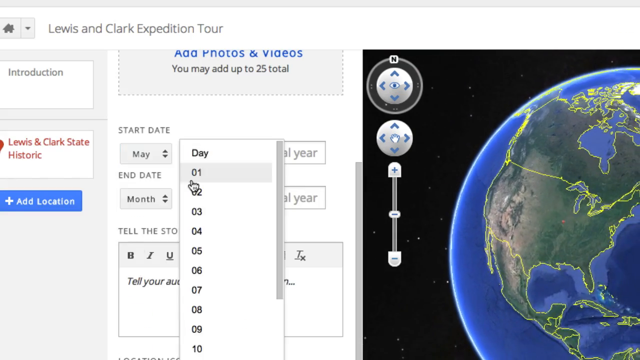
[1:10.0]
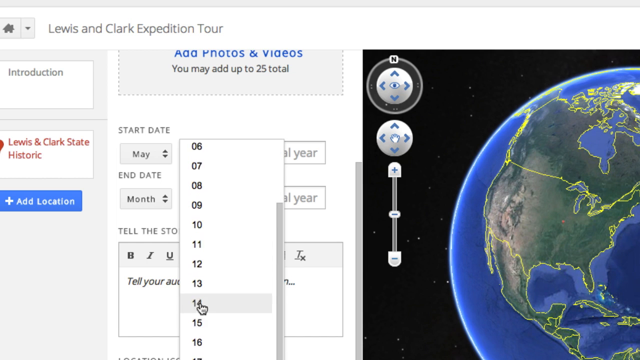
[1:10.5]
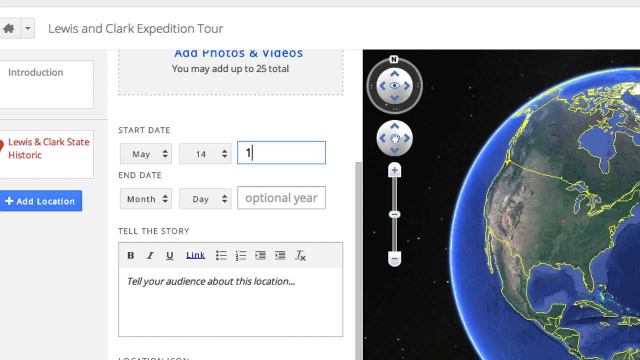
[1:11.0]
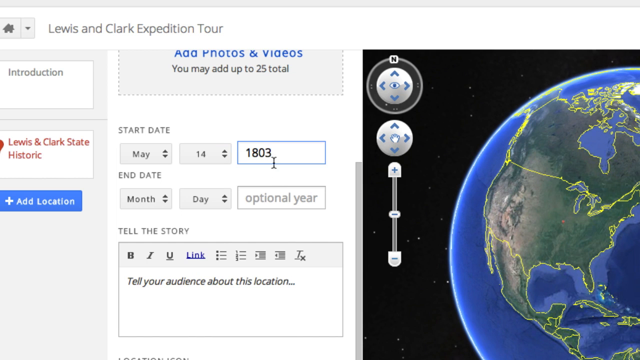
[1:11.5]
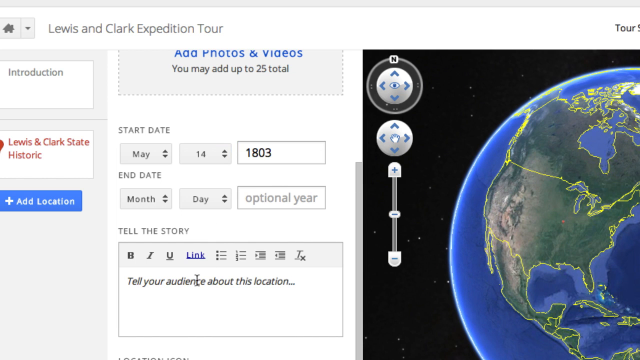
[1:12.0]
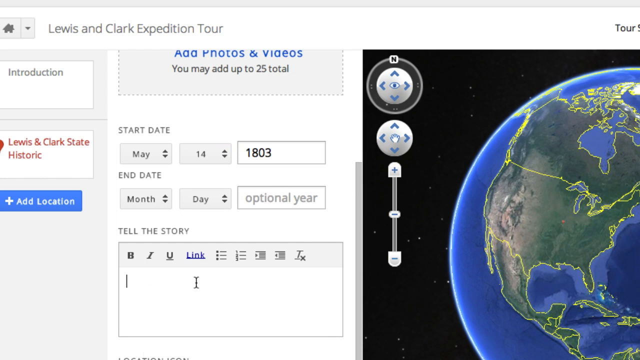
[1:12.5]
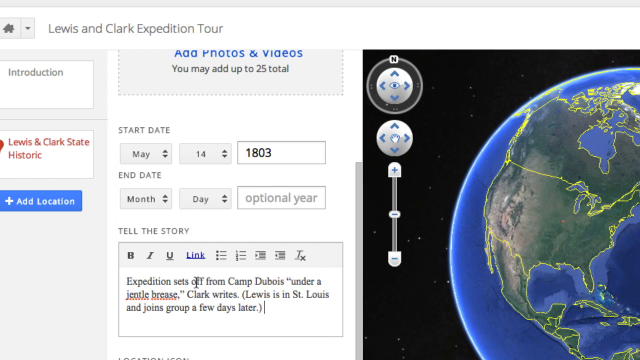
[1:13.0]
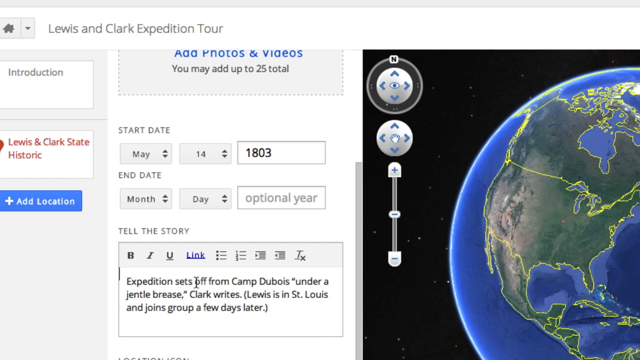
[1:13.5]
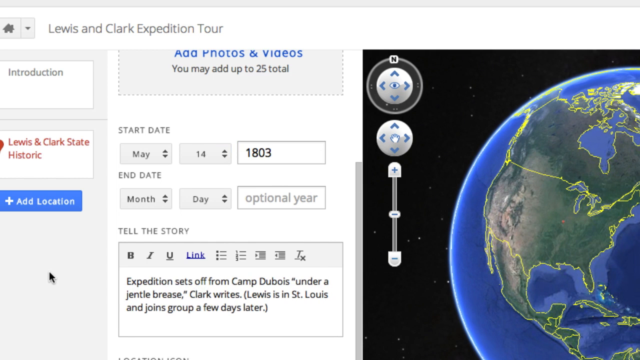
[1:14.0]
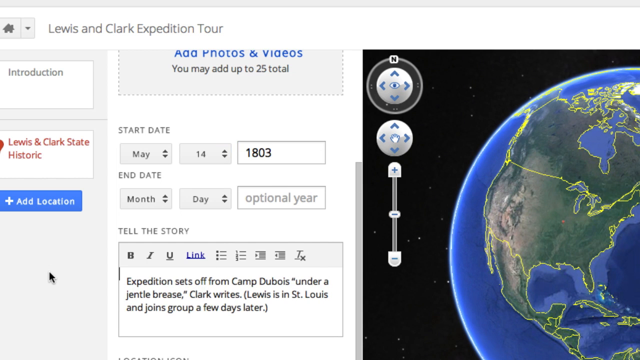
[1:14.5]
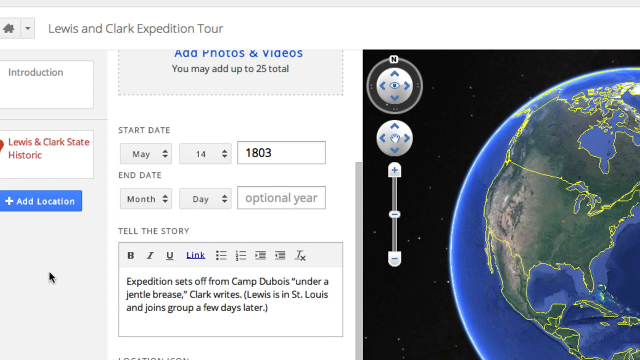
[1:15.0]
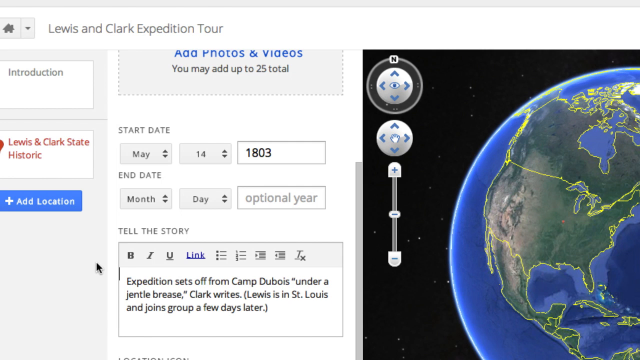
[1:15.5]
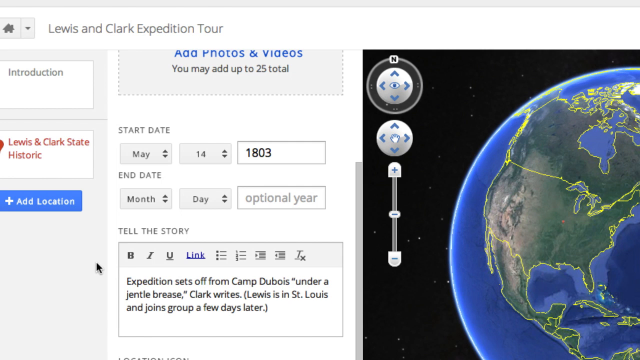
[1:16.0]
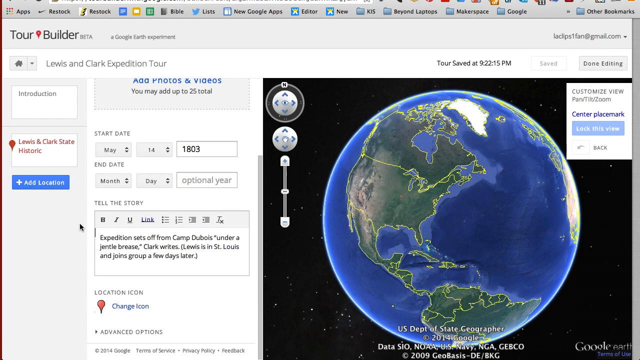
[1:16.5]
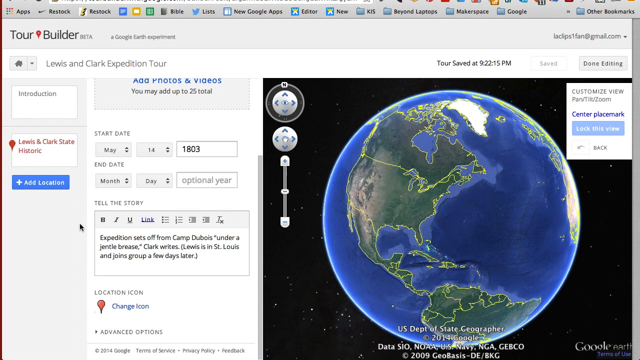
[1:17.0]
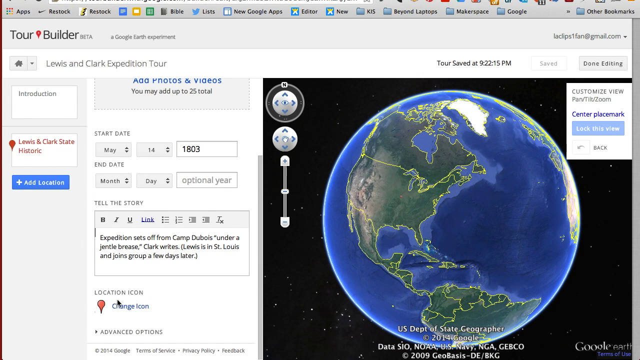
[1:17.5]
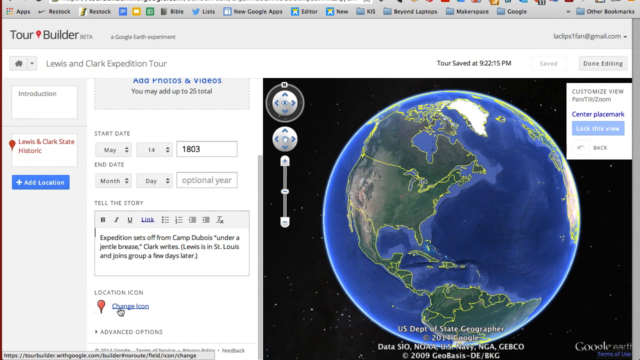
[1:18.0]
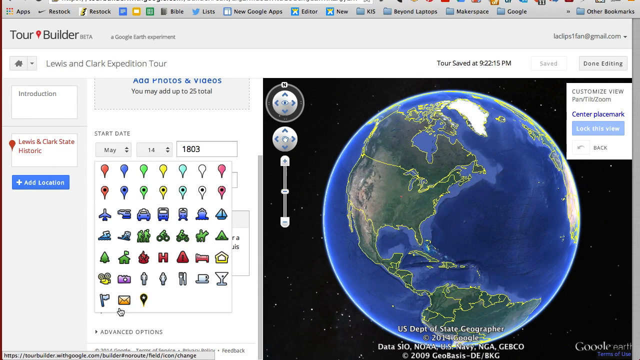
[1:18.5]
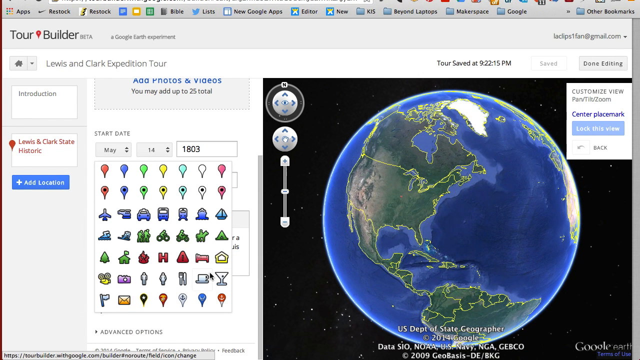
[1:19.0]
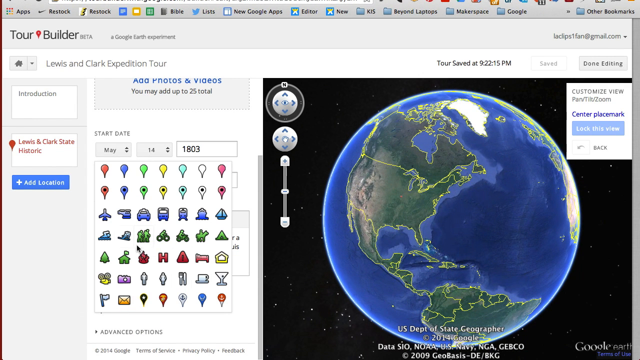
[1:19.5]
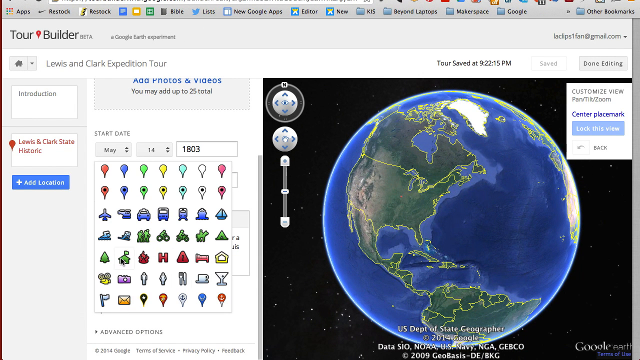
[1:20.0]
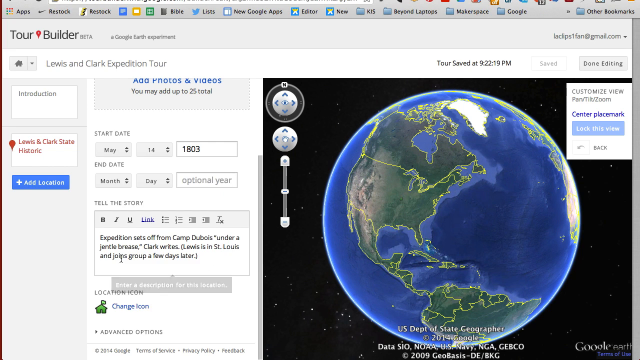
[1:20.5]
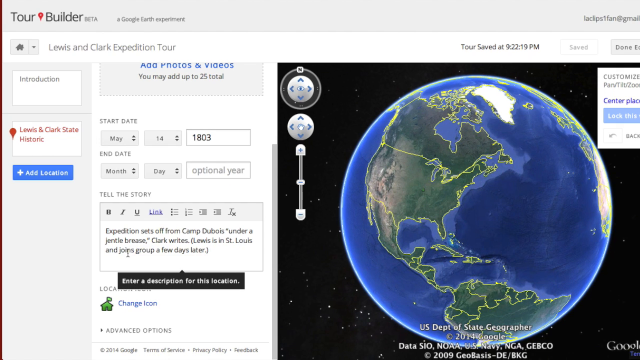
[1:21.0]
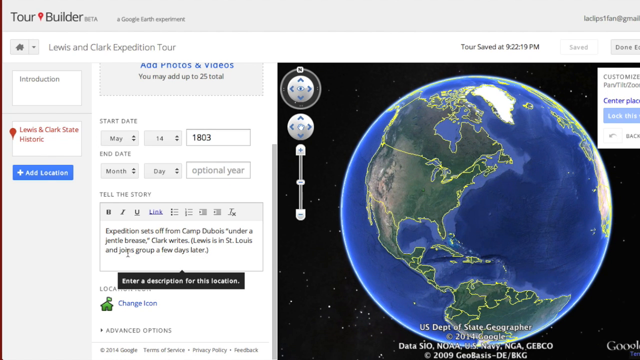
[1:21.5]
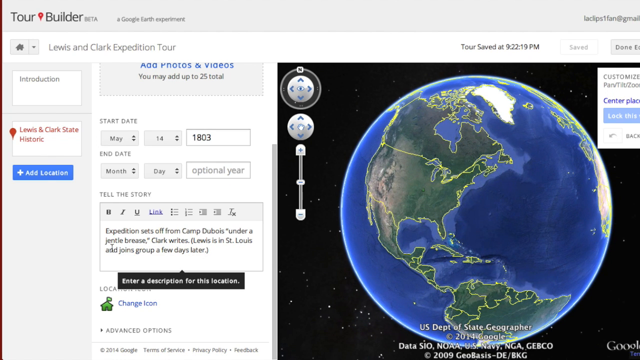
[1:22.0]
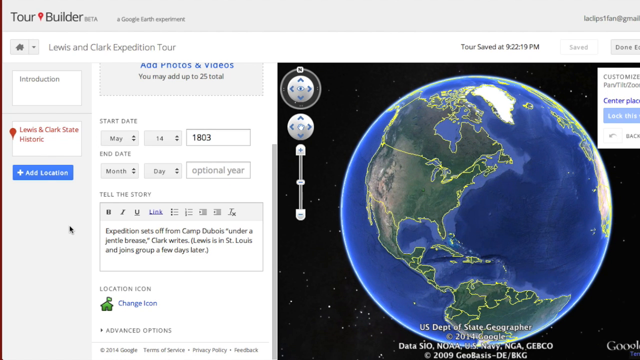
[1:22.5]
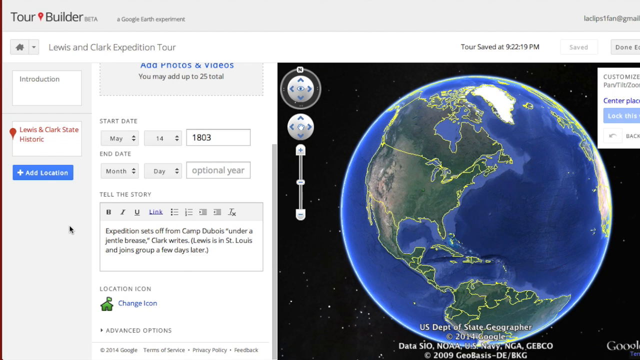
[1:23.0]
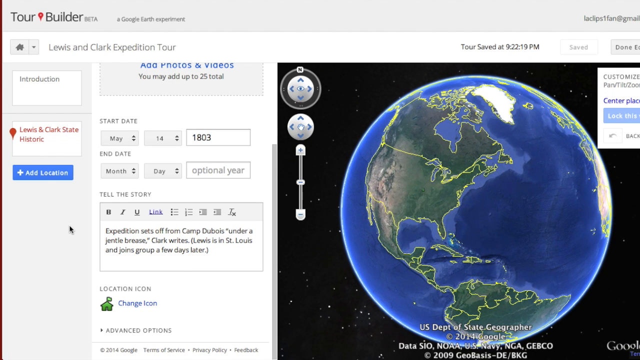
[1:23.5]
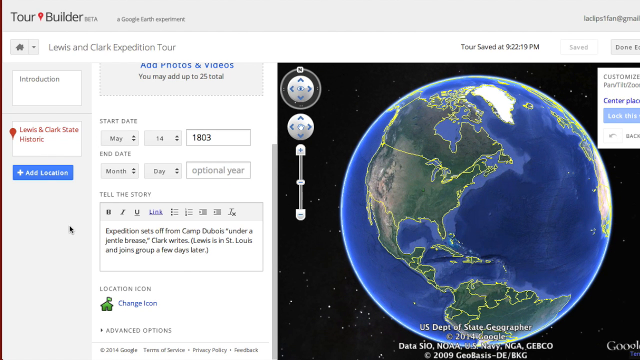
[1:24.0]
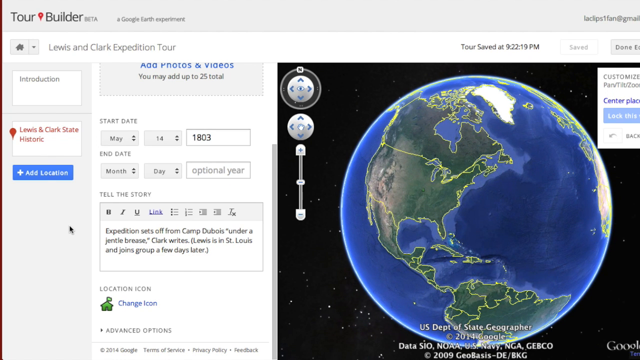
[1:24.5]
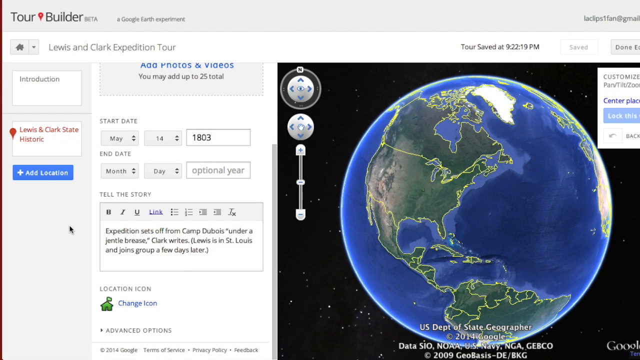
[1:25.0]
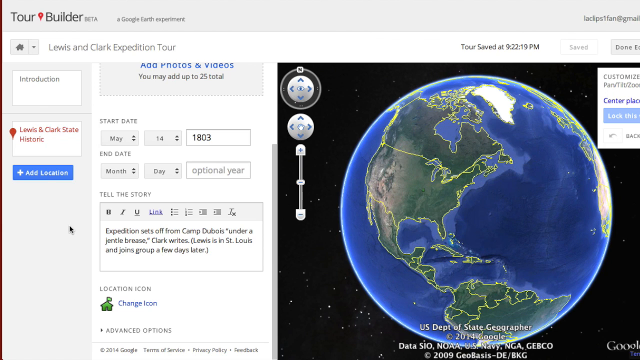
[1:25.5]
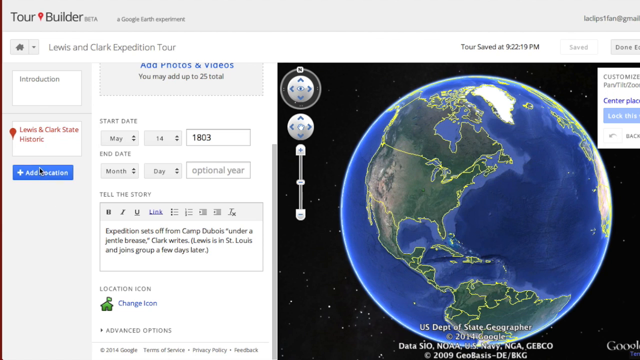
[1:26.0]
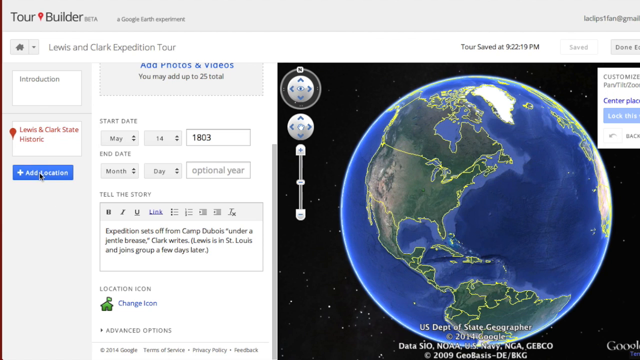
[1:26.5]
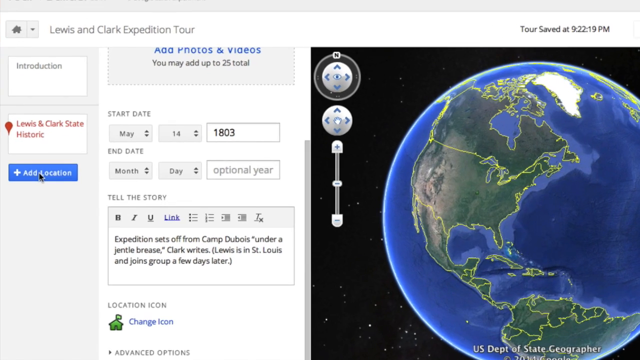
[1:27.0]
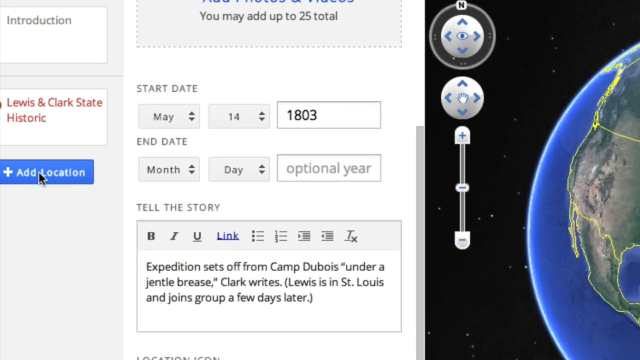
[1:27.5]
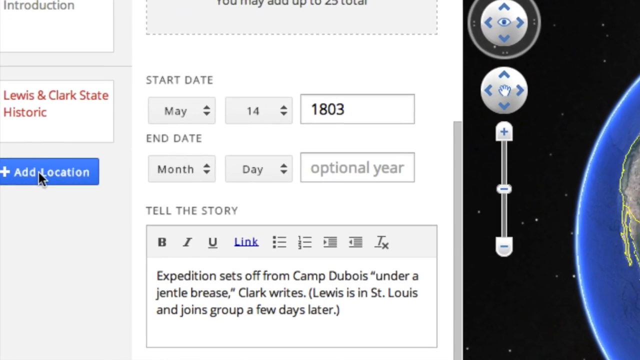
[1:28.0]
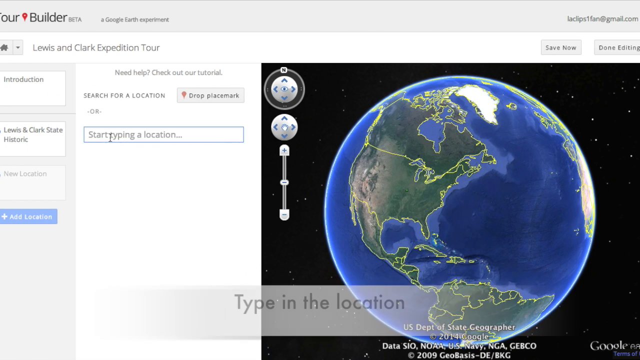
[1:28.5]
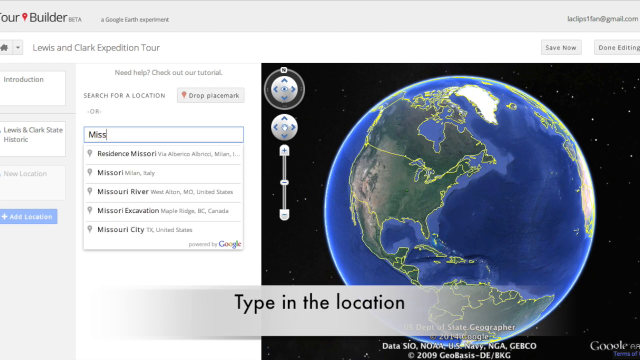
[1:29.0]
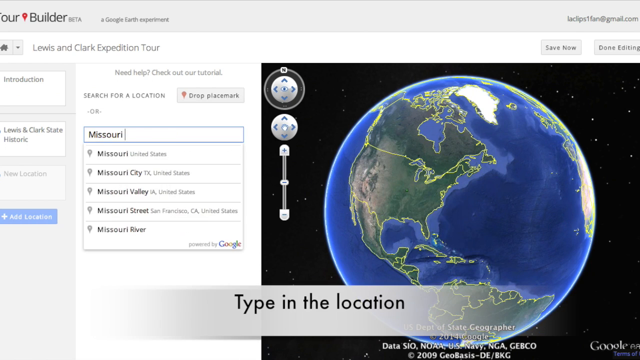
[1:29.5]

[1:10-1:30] The tour-building section now has a start and end date. The user selects May as the start month and then the date 14th, 1803. Below that is a "tell your story" part, where he pastes in a description reading "expedition sets off from Camp Du Bois under a gentle breeze. Clark writes Lewis is in St. Louis and joins group a few days later." There is a button to change the location icon, and the user clicks a little green building. The user scrolls the mouse to show everything, zooms in again, clicks add location, and adds a new location called Missouri River. The map is now focused on North America, but the pin for this location has not yet been added to the globe.